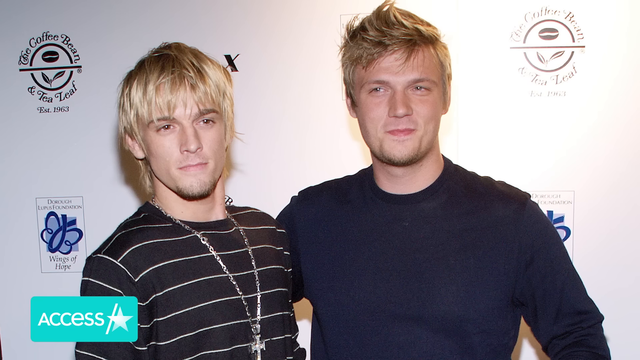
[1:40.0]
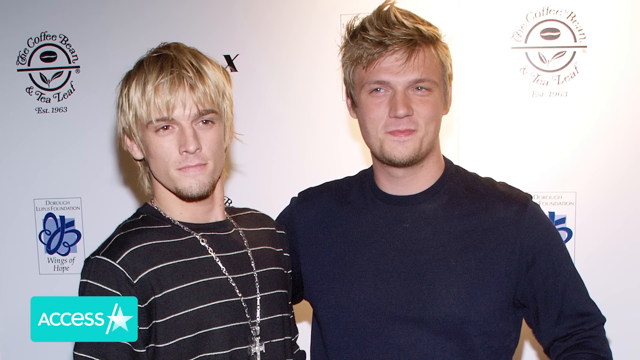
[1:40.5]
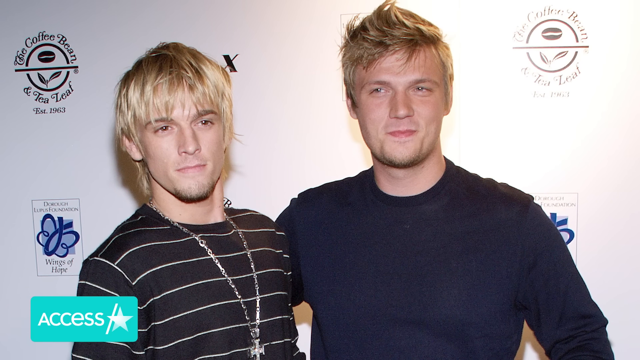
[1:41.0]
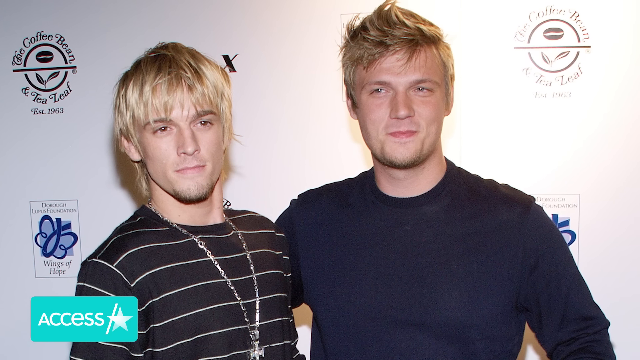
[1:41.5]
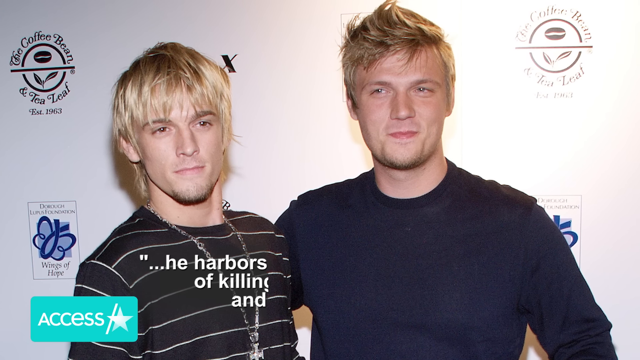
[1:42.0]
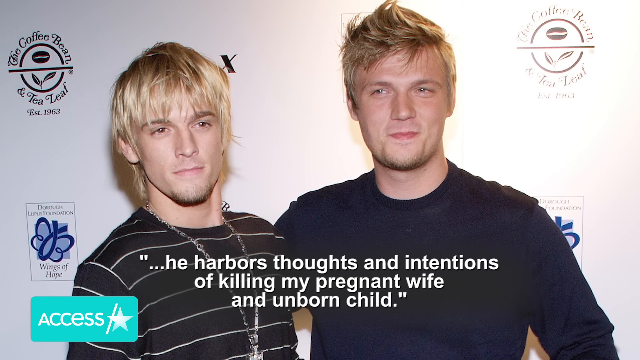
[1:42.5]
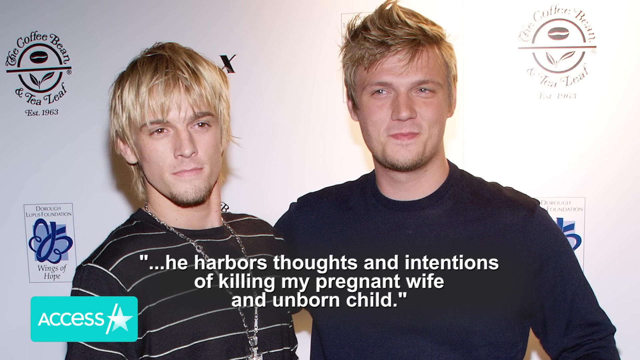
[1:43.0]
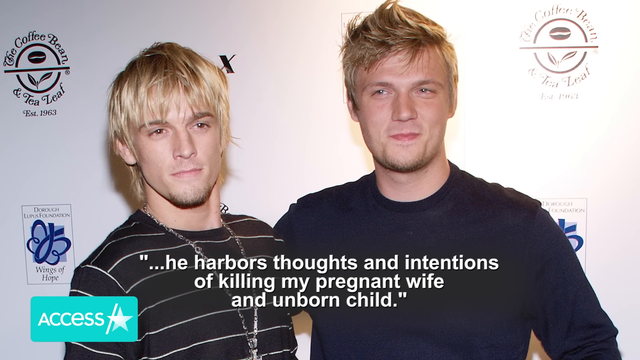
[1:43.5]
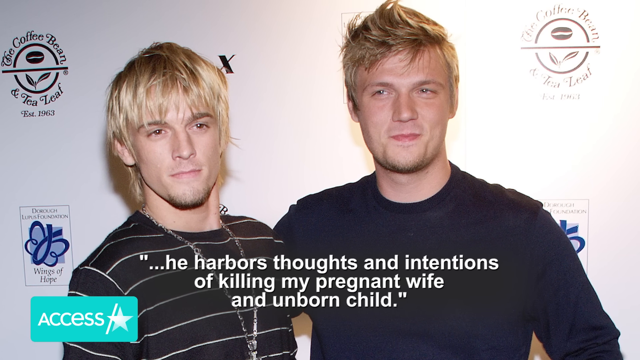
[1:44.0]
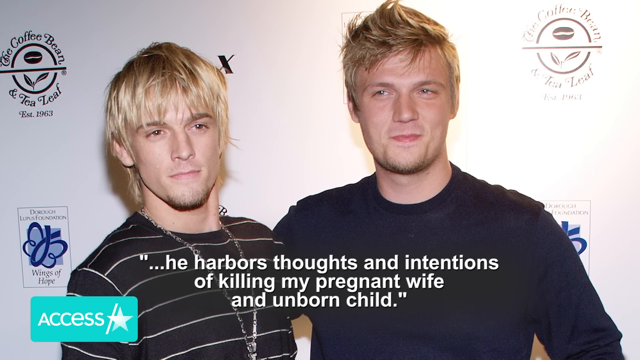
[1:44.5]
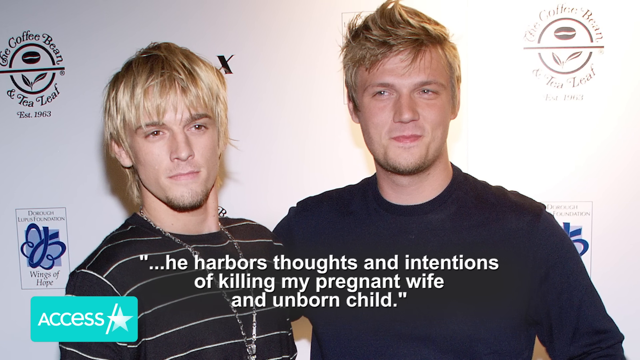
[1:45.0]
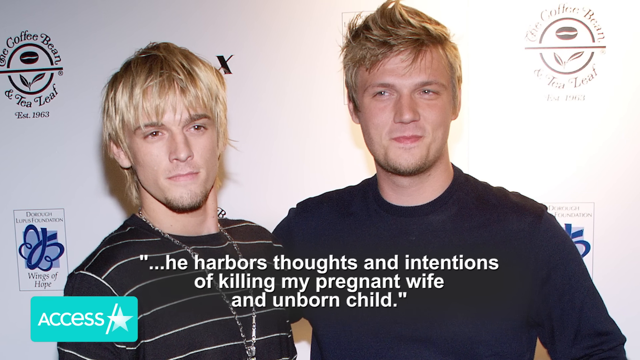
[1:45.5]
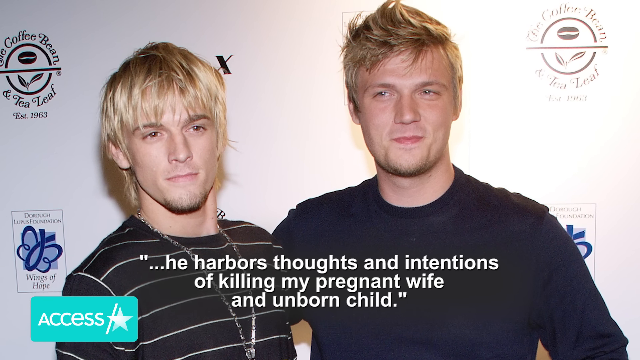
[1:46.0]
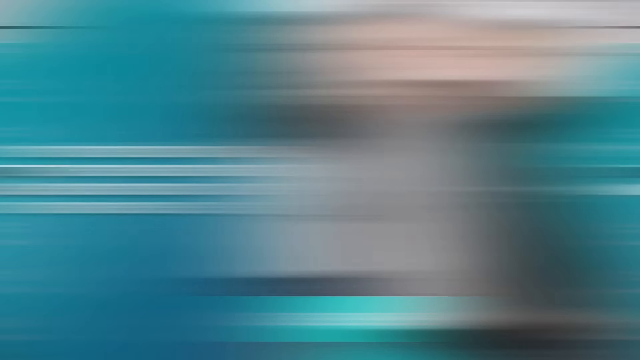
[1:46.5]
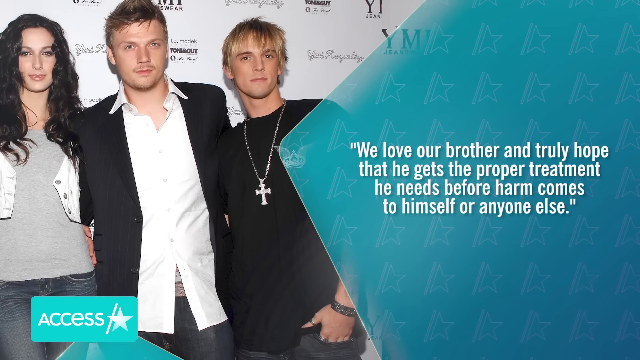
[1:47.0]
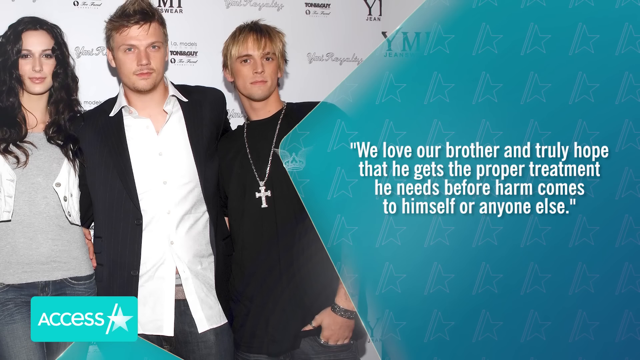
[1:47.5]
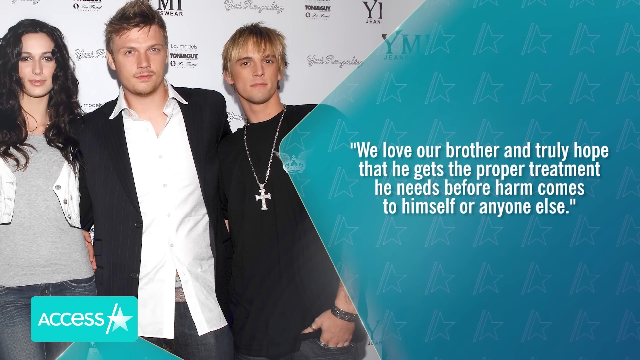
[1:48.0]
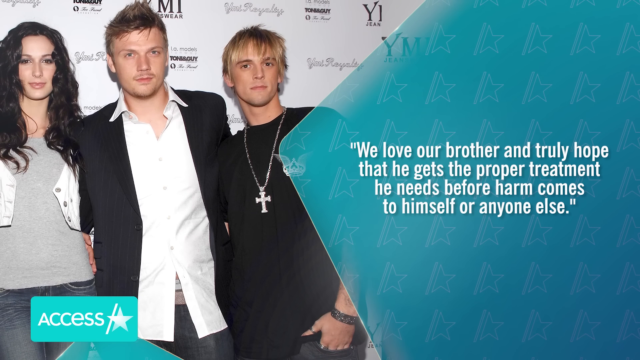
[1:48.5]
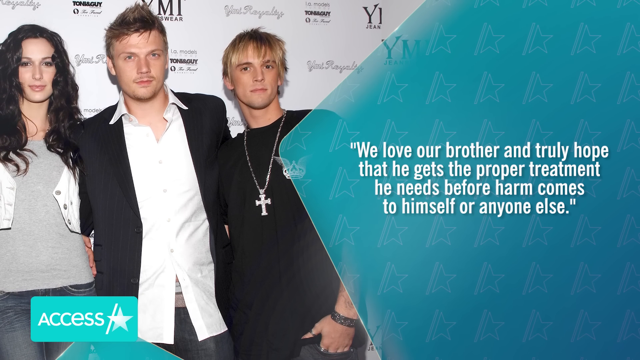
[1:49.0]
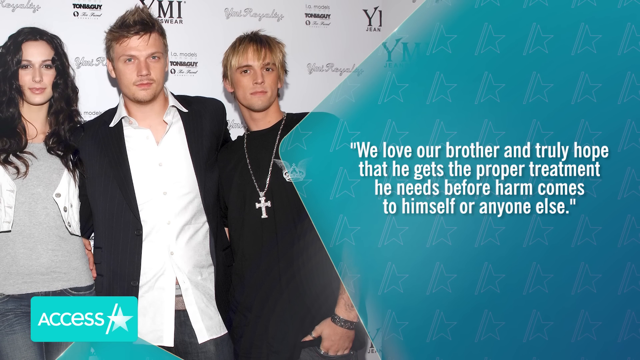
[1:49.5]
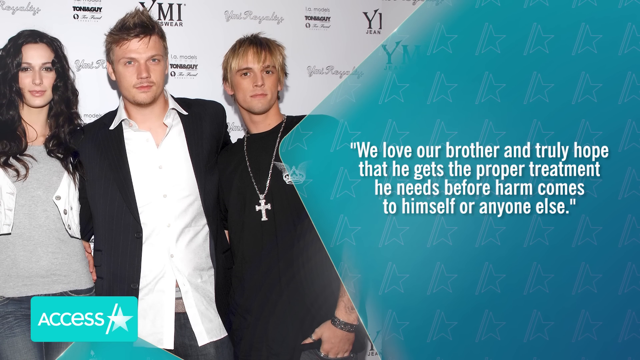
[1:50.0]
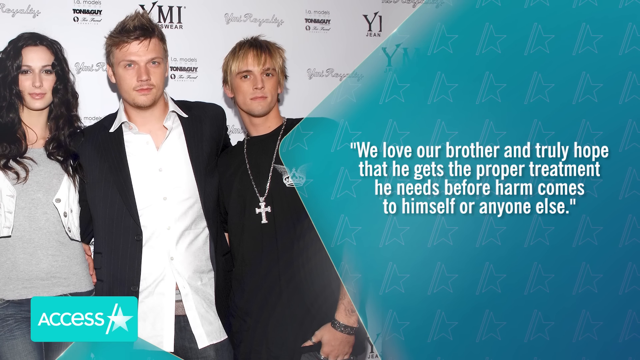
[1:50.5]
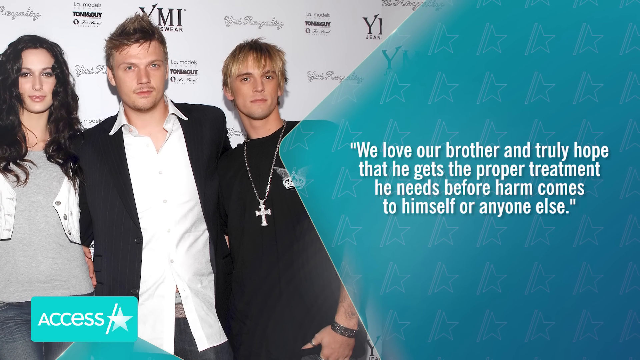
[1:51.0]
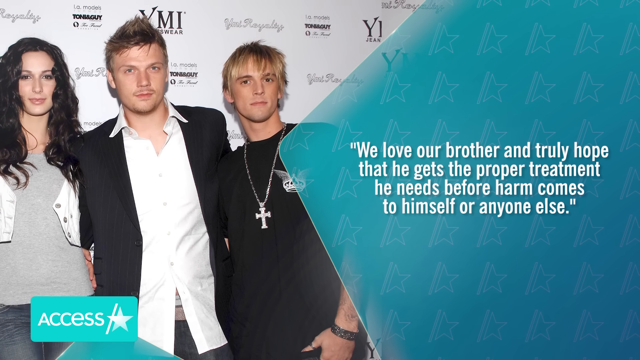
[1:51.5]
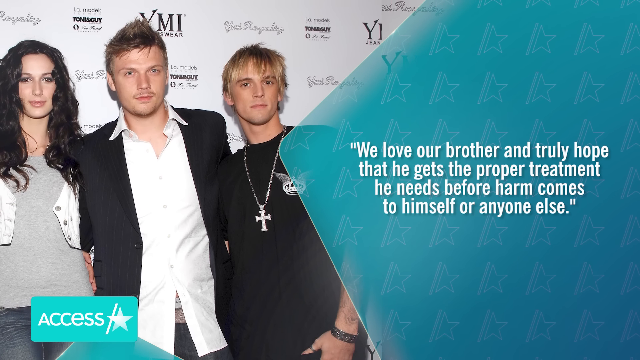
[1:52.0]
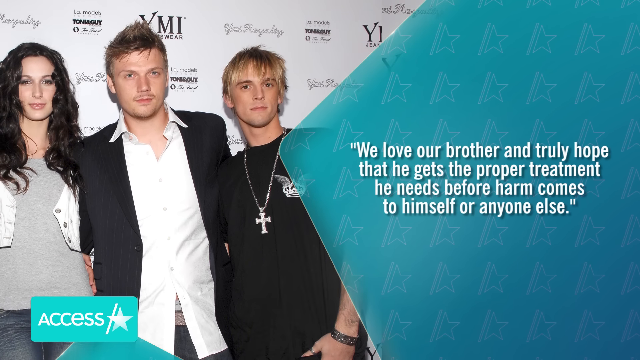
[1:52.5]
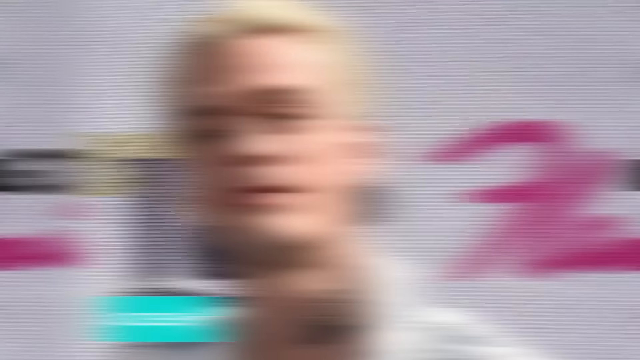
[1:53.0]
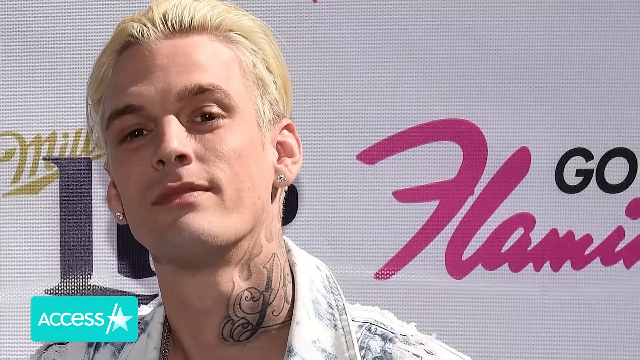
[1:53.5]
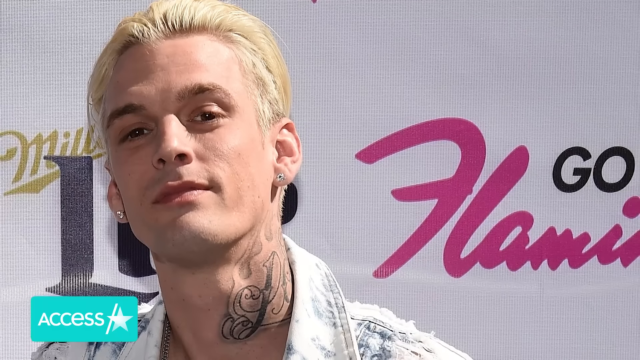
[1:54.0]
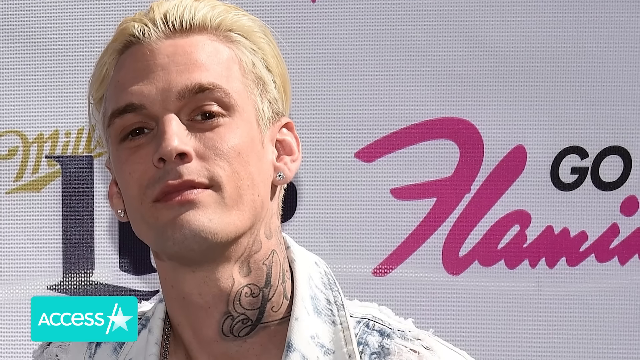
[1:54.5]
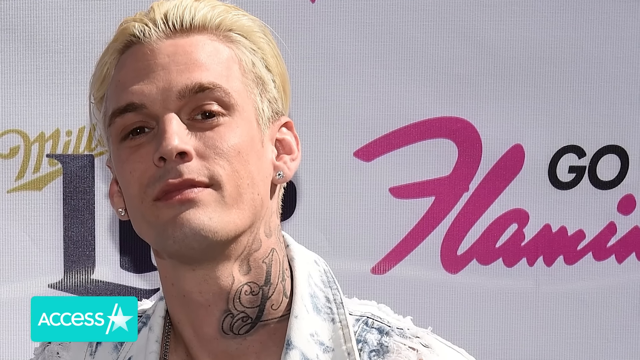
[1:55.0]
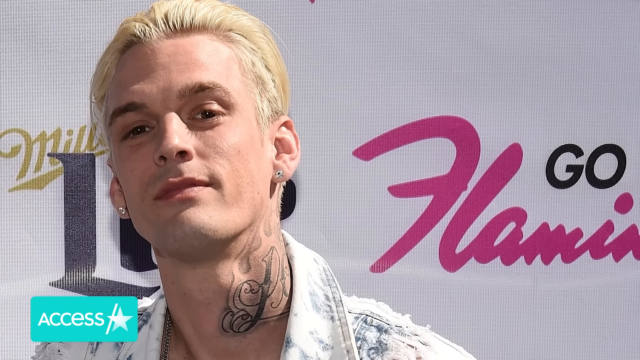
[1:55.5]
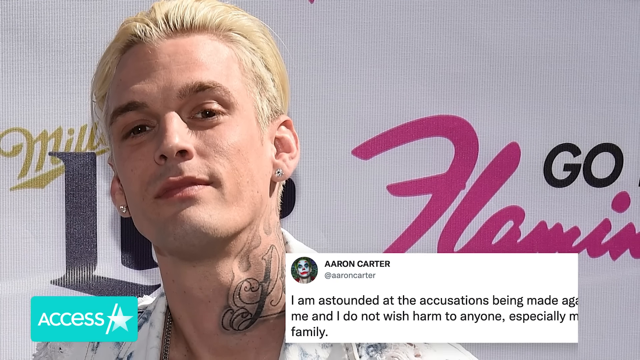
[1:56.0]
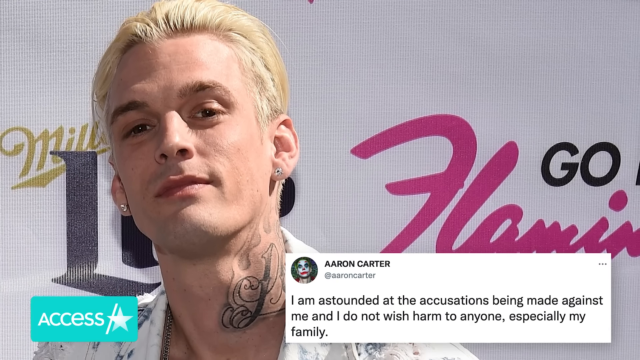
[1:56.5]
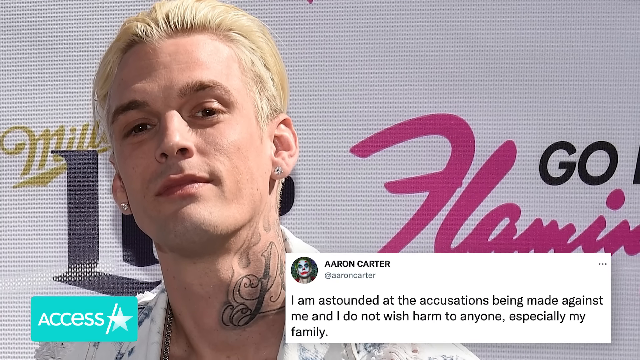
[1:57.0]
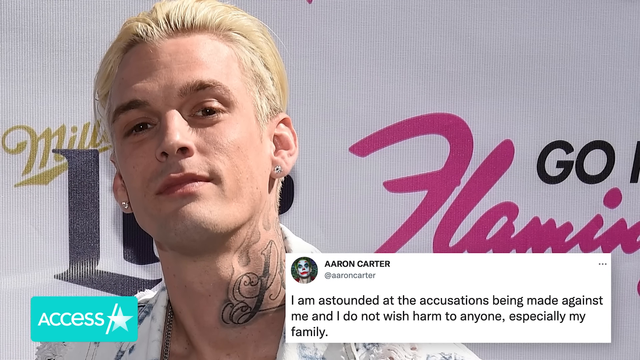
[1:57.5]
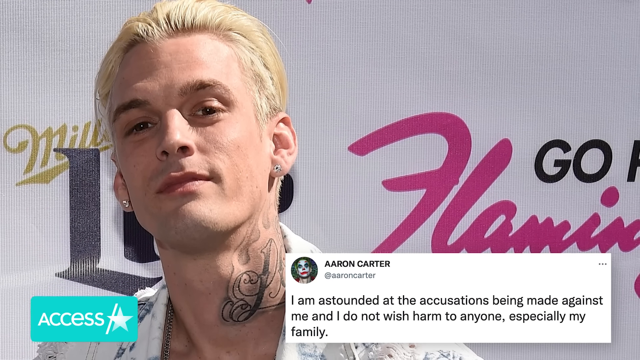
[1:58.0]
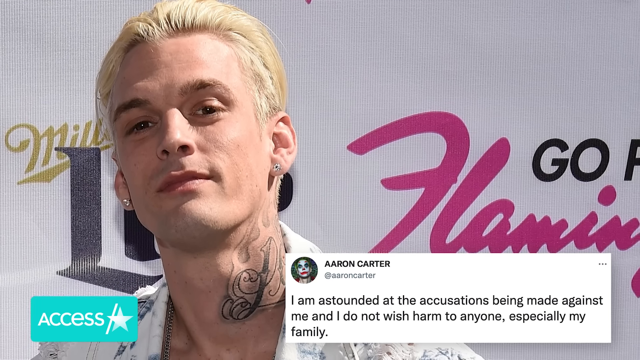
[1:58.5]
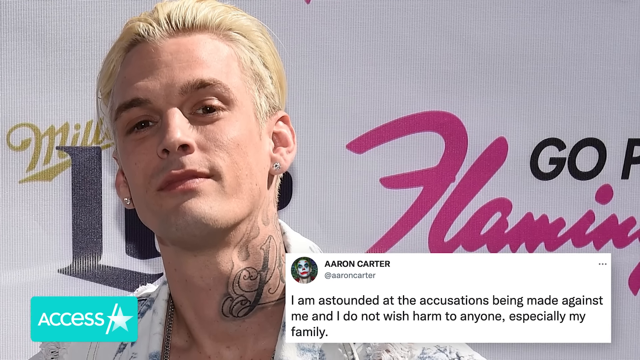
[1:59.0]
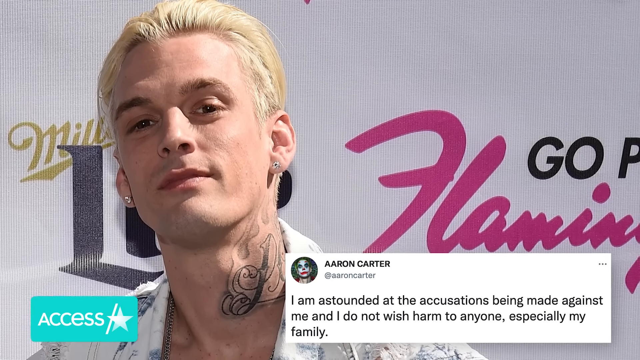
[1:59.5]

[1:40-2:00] Aaron Carter is on the left side and his brother Nick Carter is on the right side at some sort of event. Captions at the bottom say "he harbors thoughts and intentions of killing my pregnant wife and unborn child." On the left is an image of Aaron Carter, Nick Carter, and a woman on the left side, while a caption on the right says "We love our brother and truly hope that he gets the proper treatment he needs before harm comes to himself or anyone else." The scene then shows a close-up of Aaron Carter, with a tweet in the bottom right corner. He has a tattoo on the left side of his neck and wears earrings.